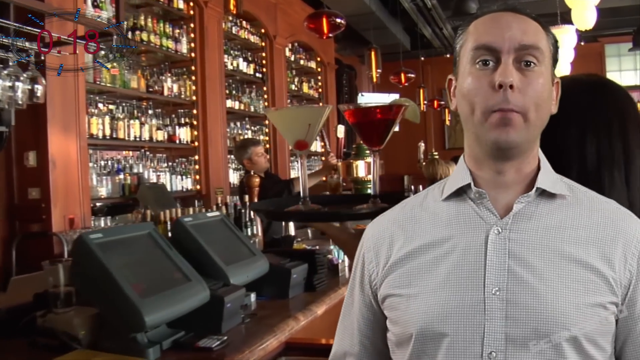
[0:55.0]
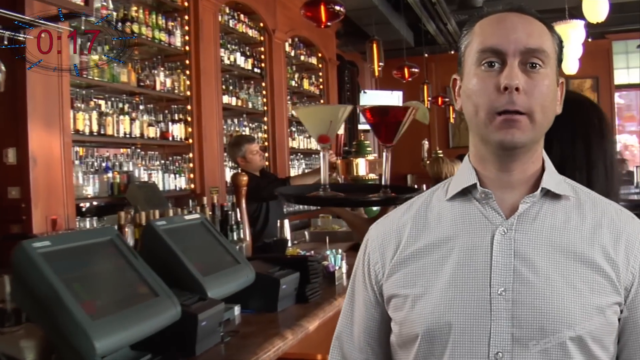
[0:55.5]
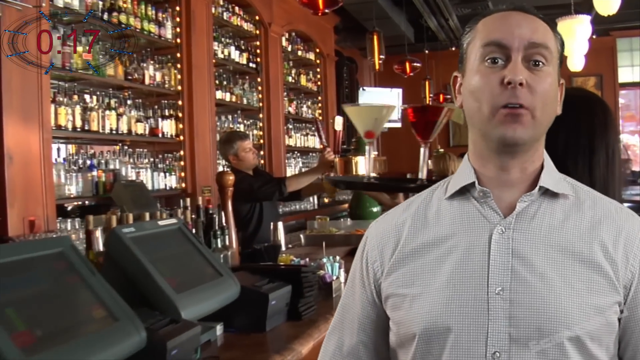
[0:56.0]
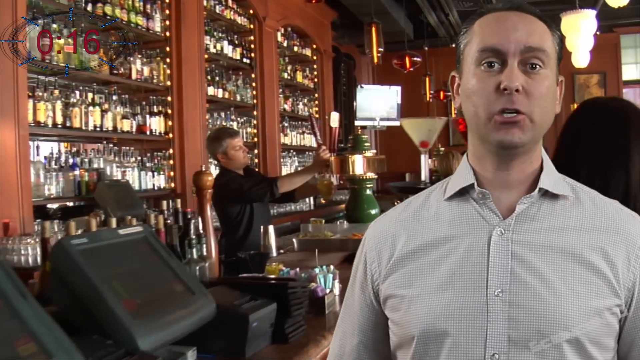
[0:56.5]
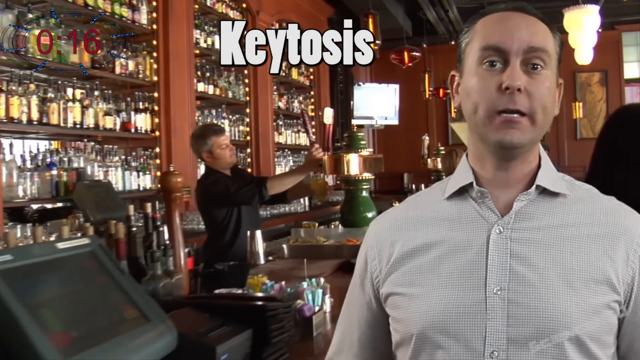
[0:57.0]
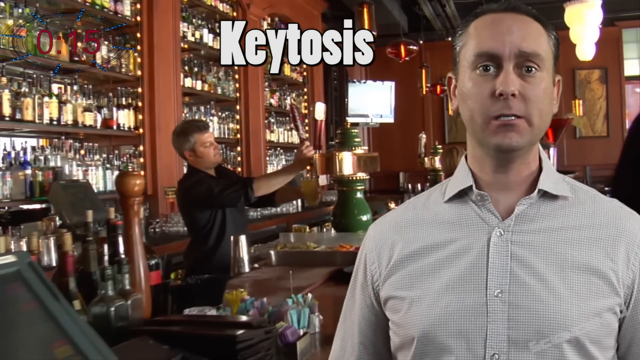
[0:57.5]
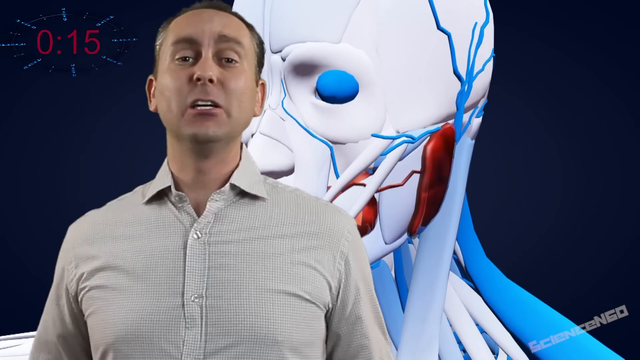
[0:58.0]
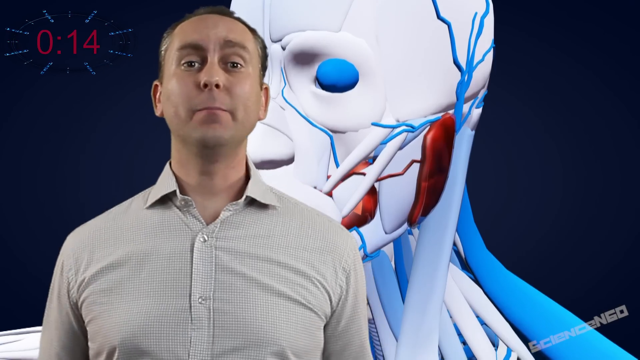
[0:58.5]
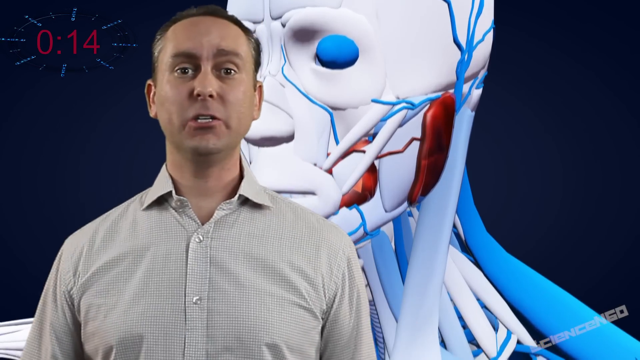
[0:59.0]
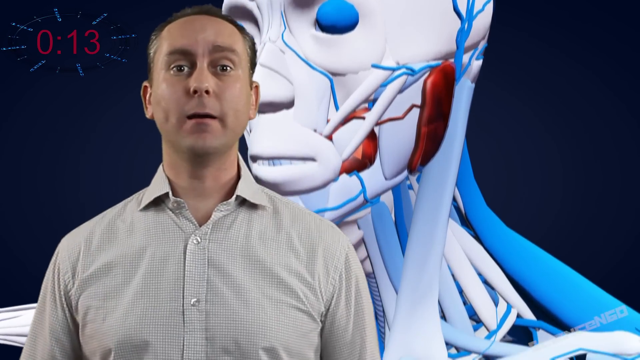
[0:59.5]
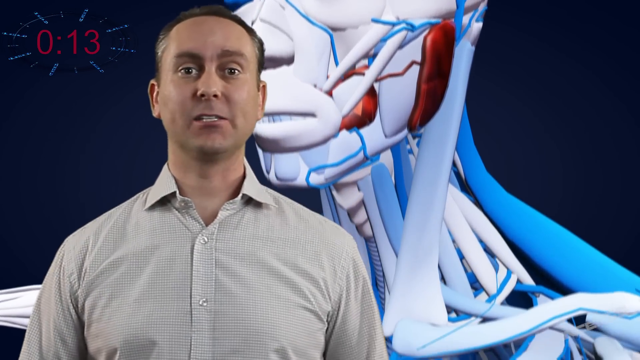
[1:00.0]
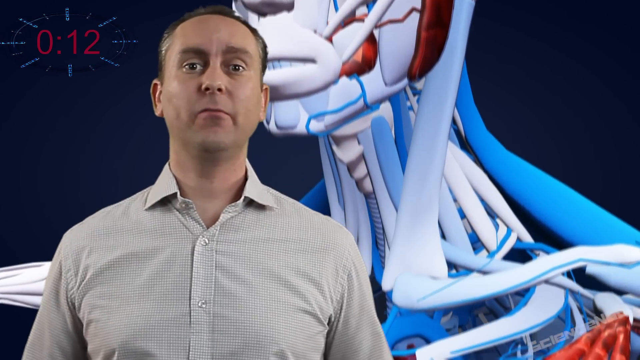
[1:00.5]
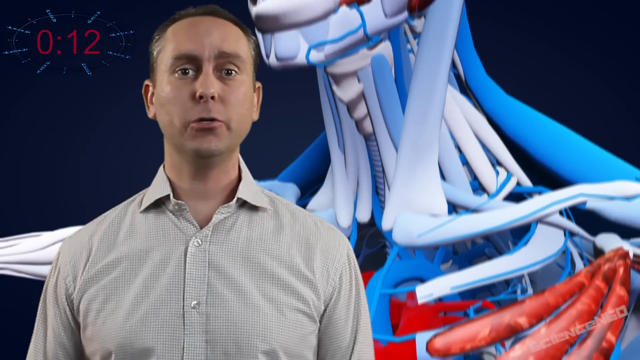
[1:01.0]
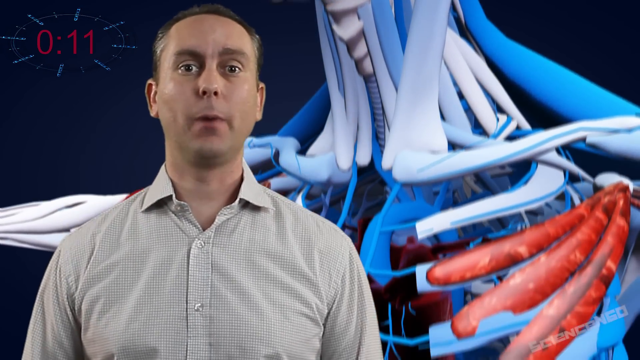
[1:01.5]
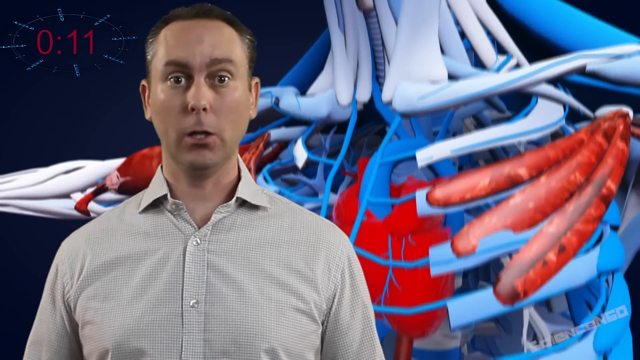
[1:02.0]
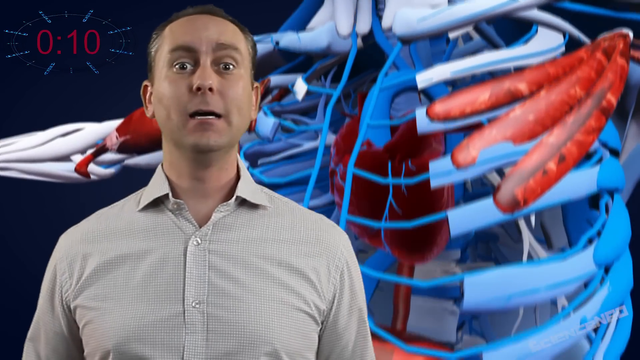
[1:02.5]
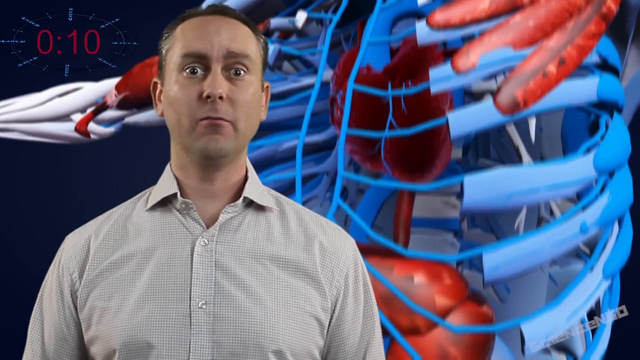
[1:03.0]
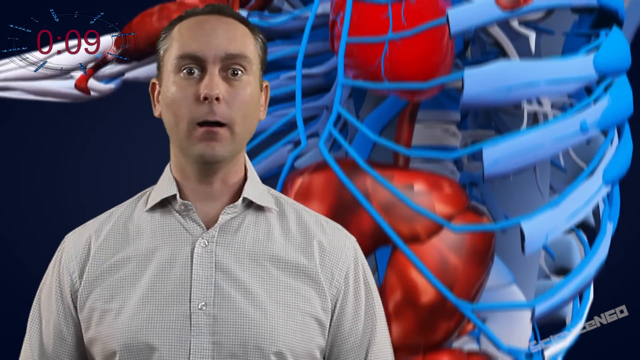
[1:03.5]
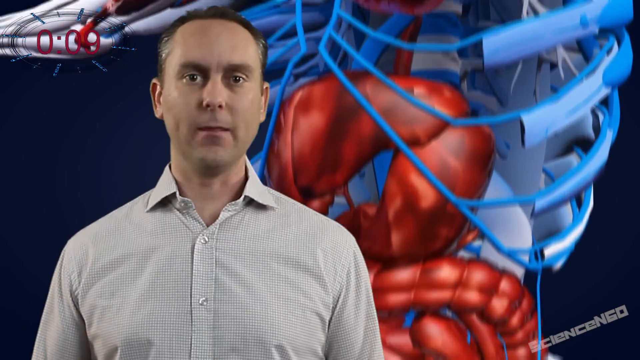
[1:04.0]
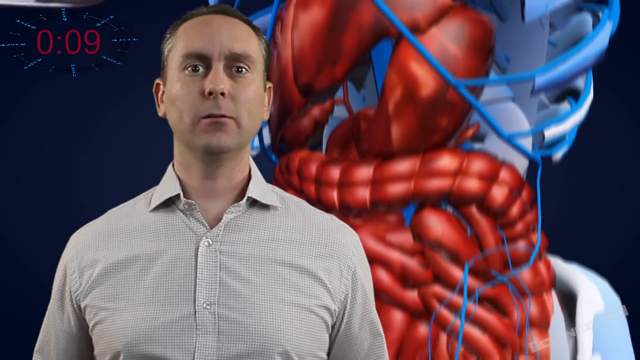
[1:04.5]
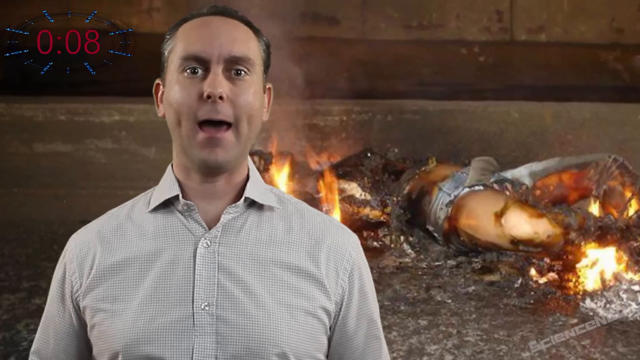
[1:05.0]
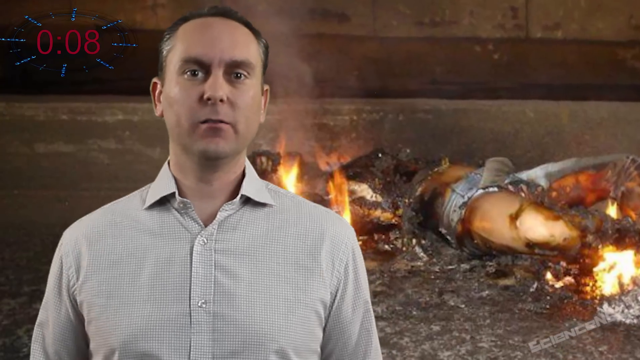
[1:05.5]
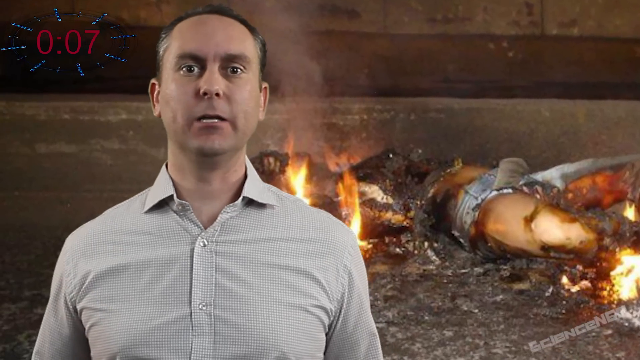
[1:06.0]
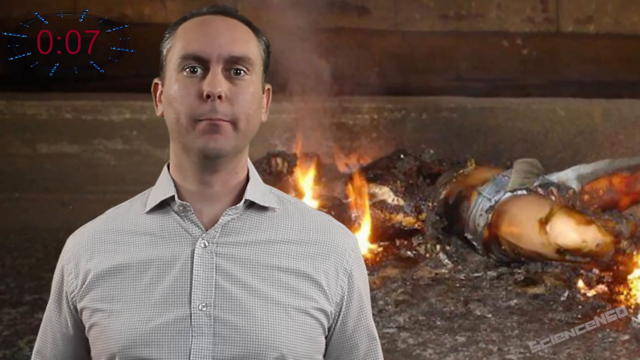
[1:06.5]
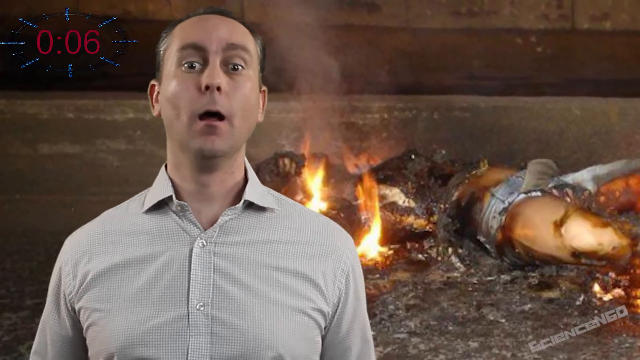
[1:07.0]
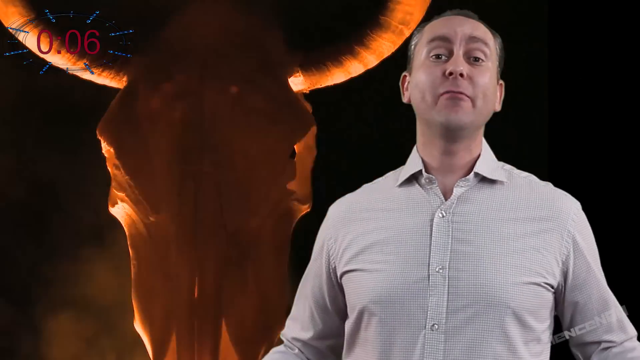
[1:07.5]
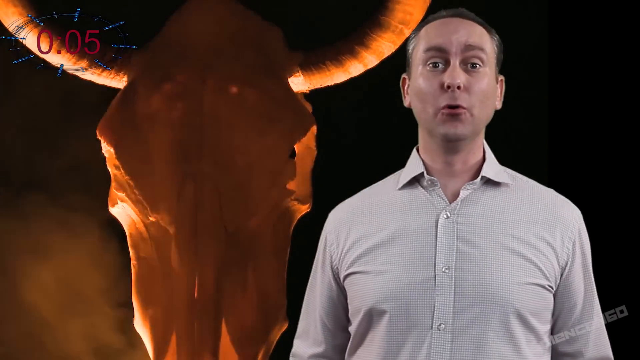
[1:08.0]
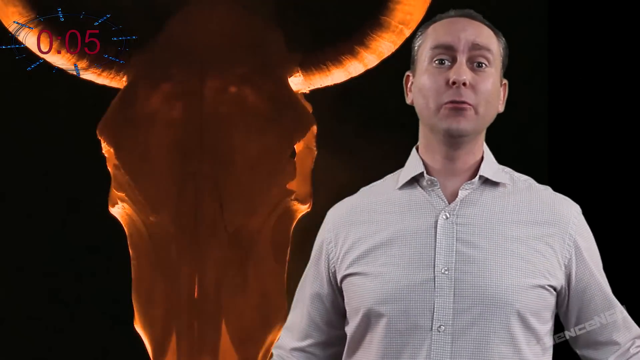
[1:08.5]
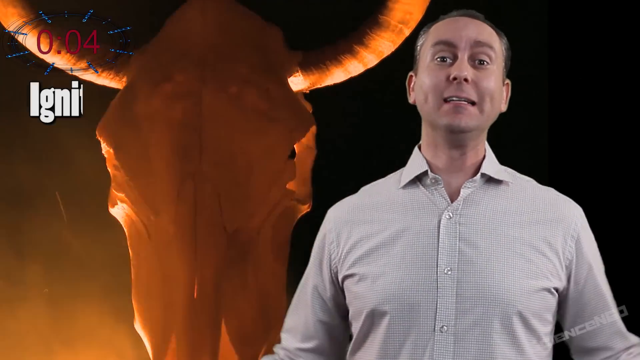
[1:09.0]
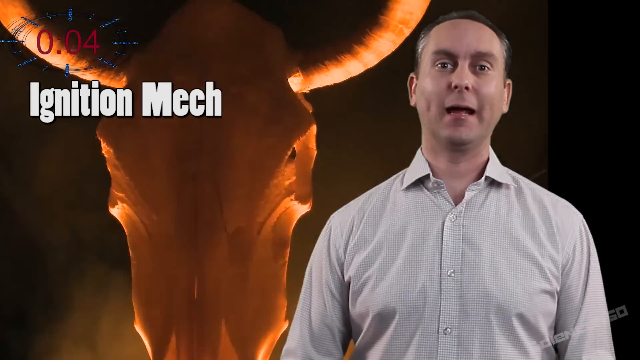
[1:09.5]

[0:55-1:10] The scene starts in a bar where drinks are being served, then moves to an image of a human body, shown like a display, while the narrator is still speaking. After the human body, someone apparently burning is shown. There is also what looks like a cow's head, and something unidentified that appears to be burning on the street.